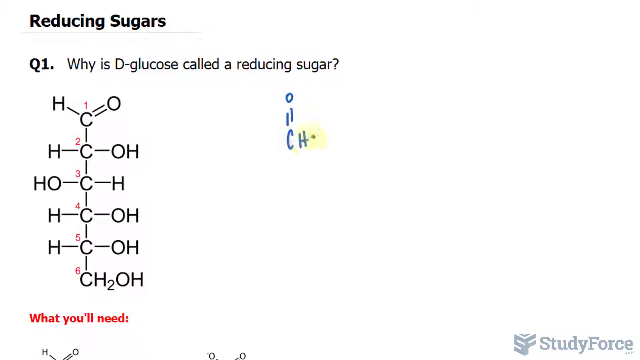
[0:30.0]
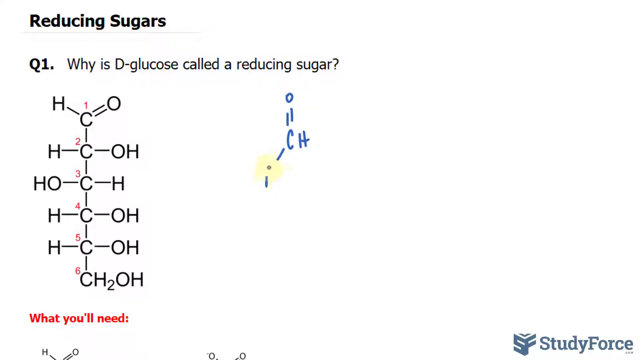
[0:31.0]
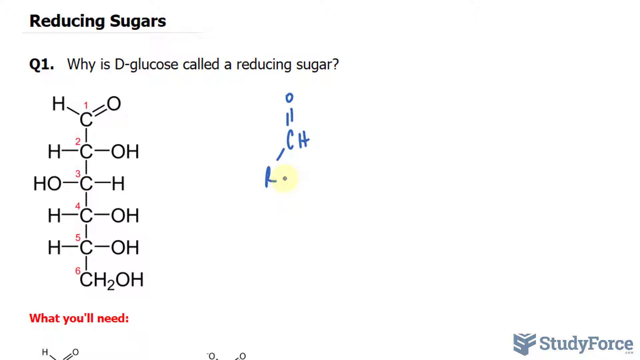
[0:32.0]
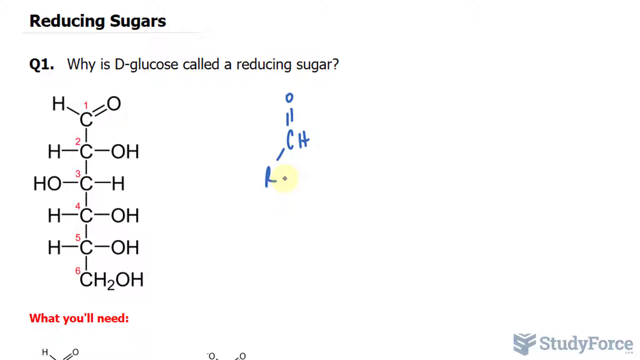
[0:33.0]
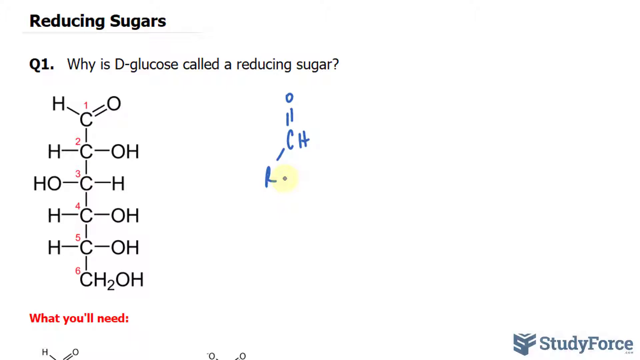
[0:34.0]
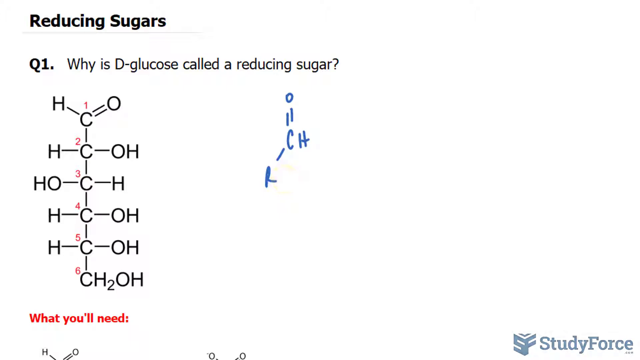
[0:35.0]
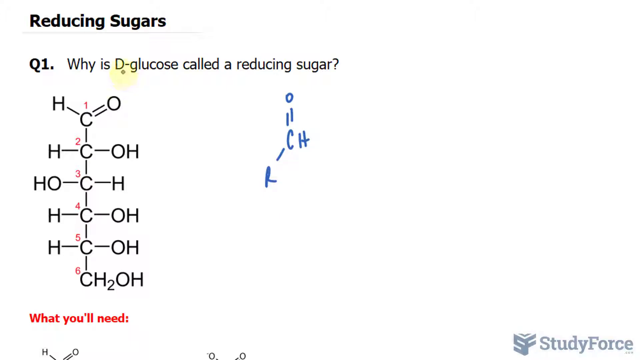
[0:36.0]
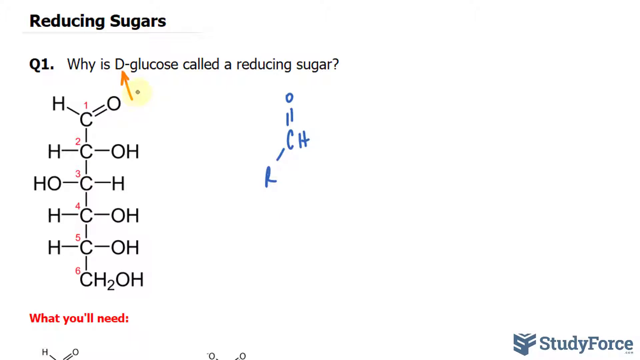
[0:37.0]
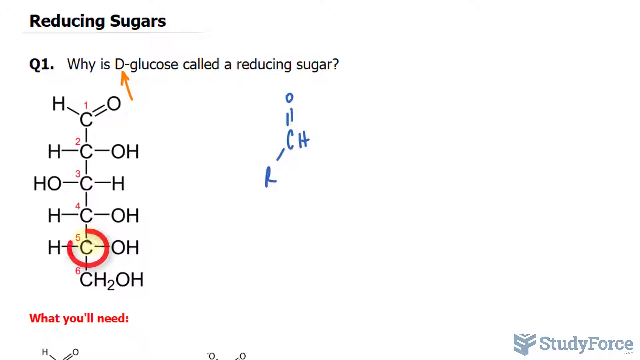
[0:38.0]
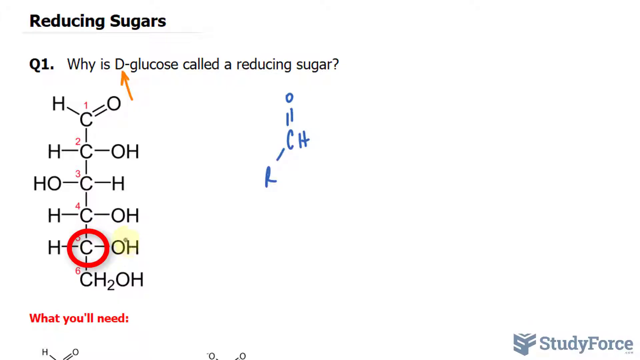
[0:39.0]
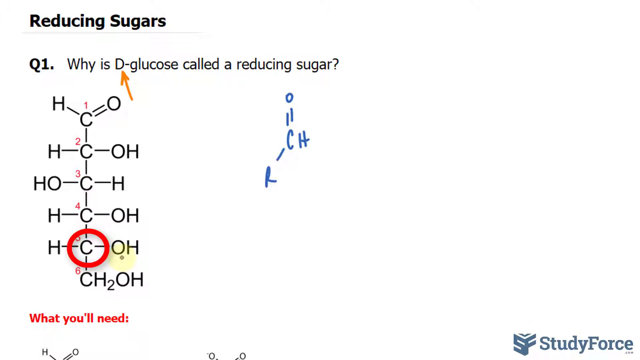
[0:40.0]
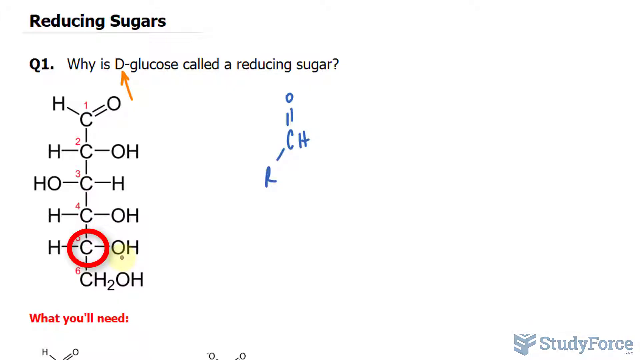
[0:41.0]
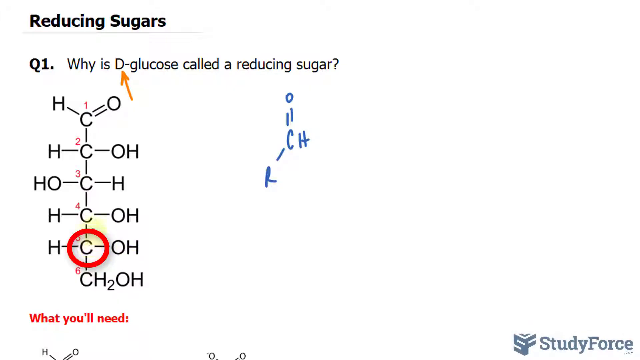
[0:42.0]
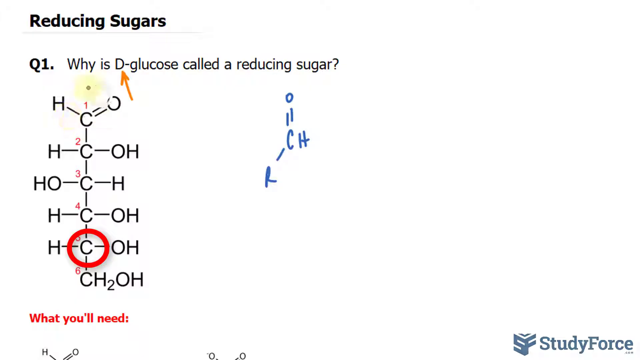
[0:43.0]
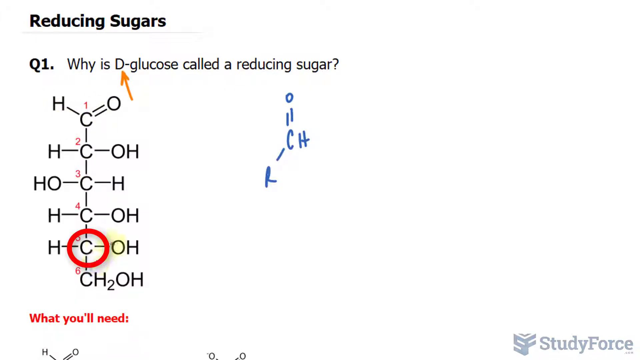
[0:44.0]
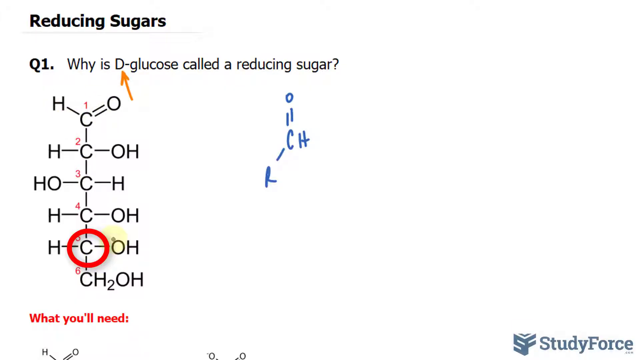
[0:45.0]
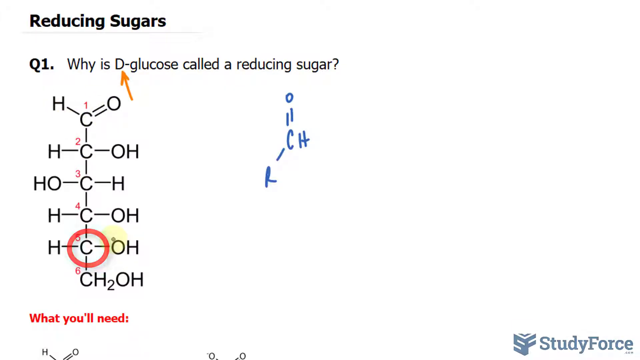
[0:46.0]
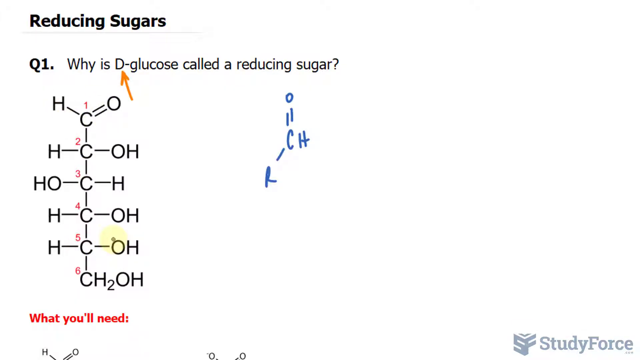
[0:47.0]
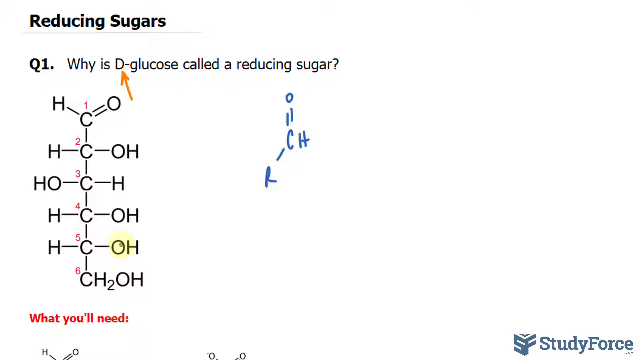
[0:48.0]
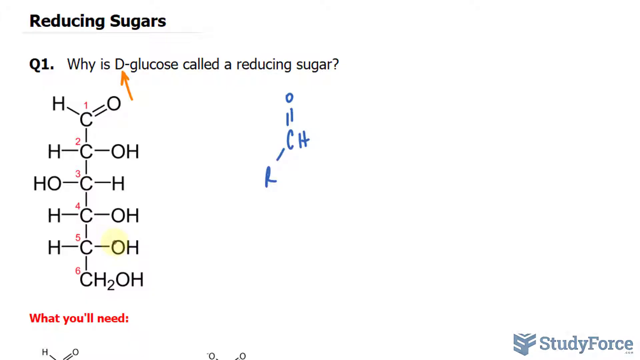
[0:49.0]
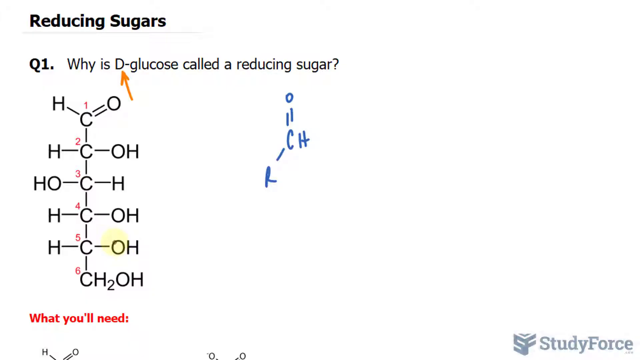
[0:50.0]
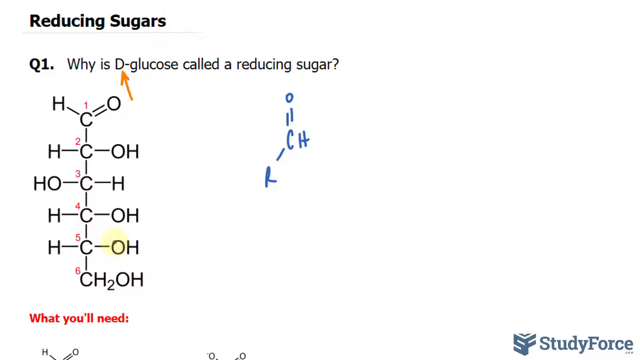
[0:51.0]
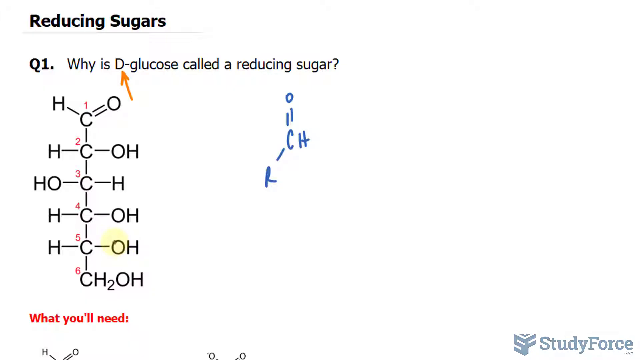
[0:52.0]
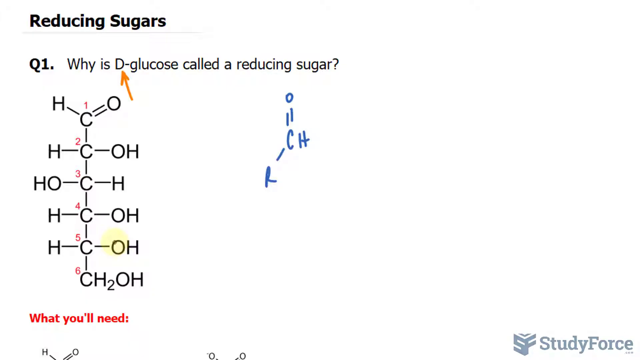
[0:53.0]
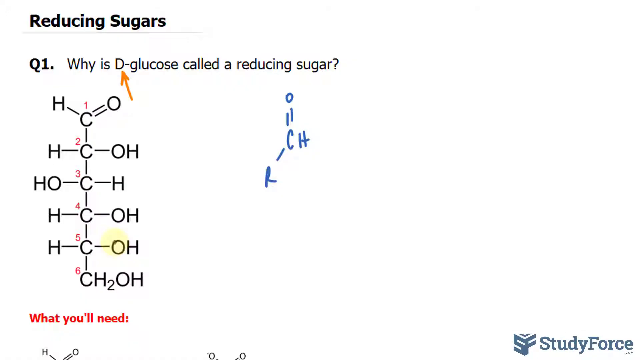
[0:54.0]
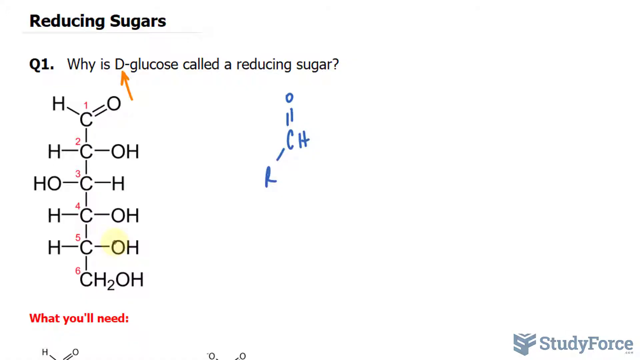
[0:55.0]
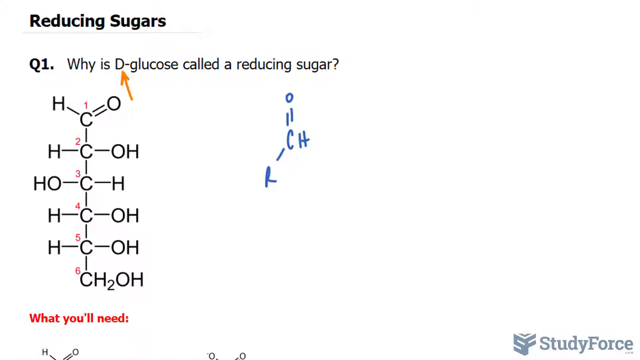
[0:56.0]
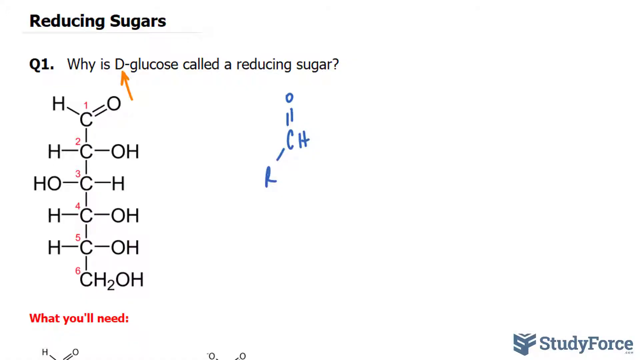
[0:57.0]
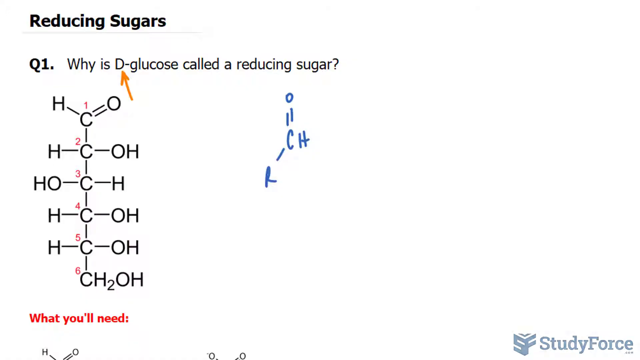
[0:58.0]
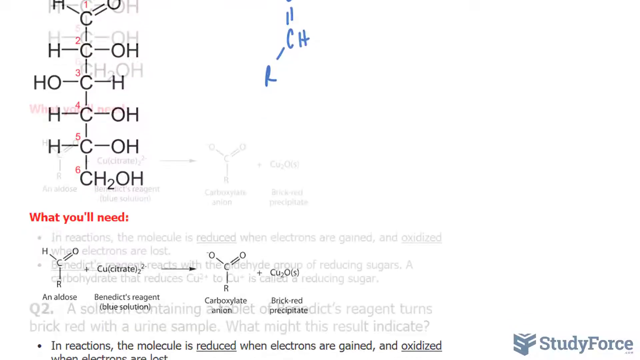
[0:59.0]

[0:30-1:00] The mouse pointer writes "CH-R" and "=0" on the page. It then highlights the D in "why is D glucose called a reducing sugar". Next, numbers 1, 2, 3, 4, 5 and 6 are shown on the C's of the chemical equation, and number 5 is highlighted. The pointer then highlights the OH attached to the number 5 C, continuing to highlight it as if apparently explaining something, and goes back to highlight the D in D glucose. The page then changes completely, as if scrolling up, to the "what you will need" section, which shows another chemical equation with HCRO O plus Cu citrate giving a carboxylate anion and brick red precipitates.